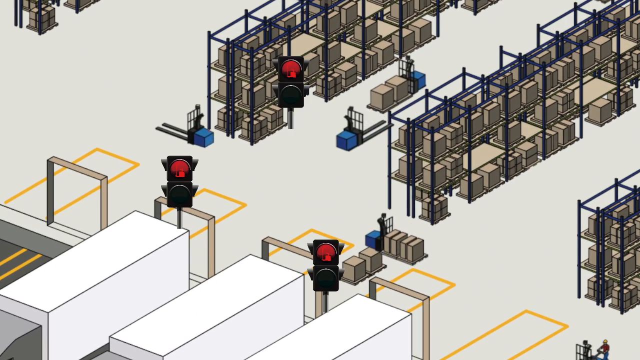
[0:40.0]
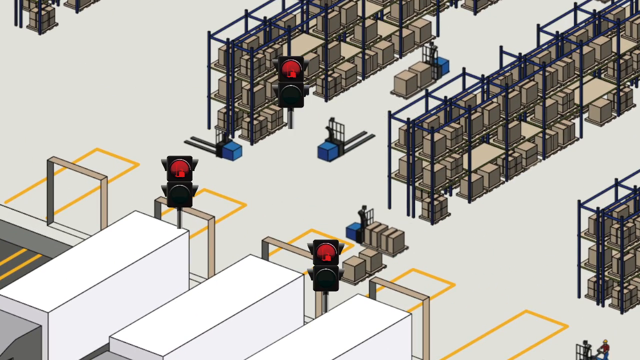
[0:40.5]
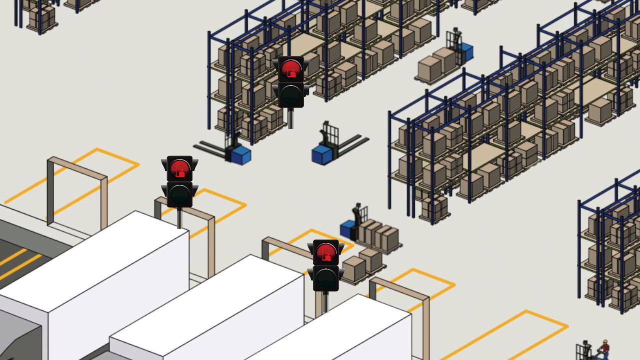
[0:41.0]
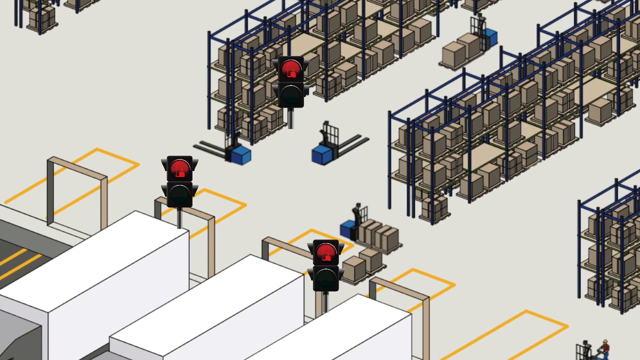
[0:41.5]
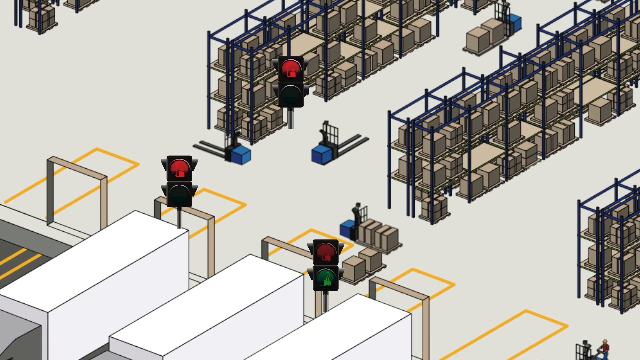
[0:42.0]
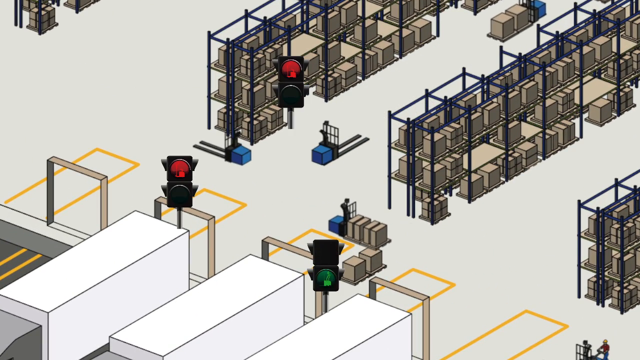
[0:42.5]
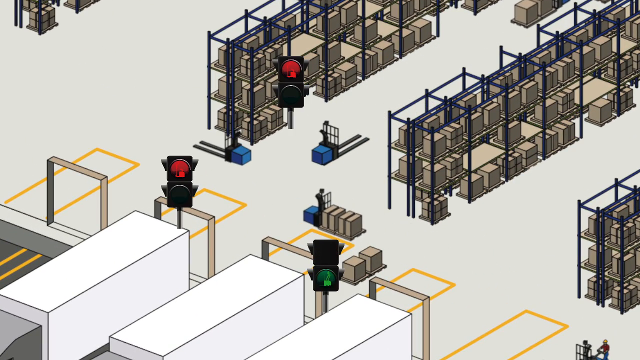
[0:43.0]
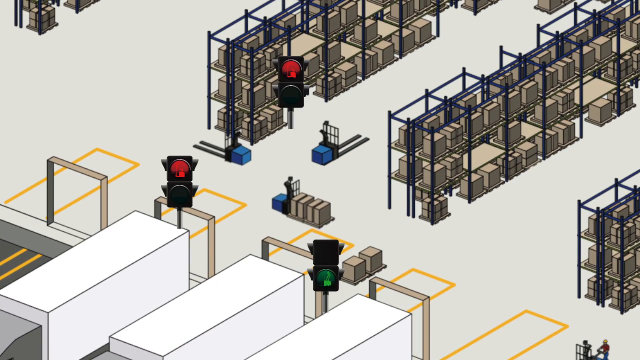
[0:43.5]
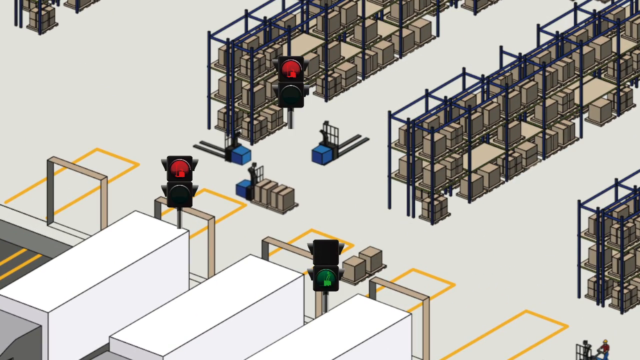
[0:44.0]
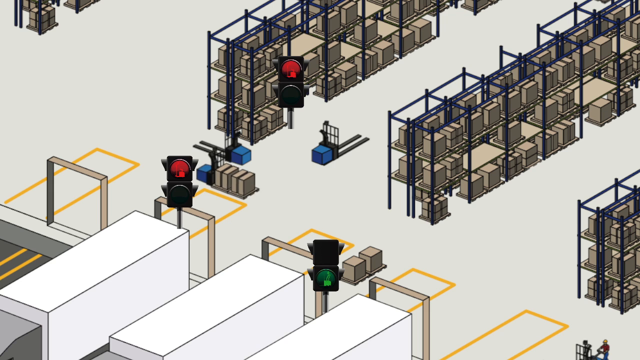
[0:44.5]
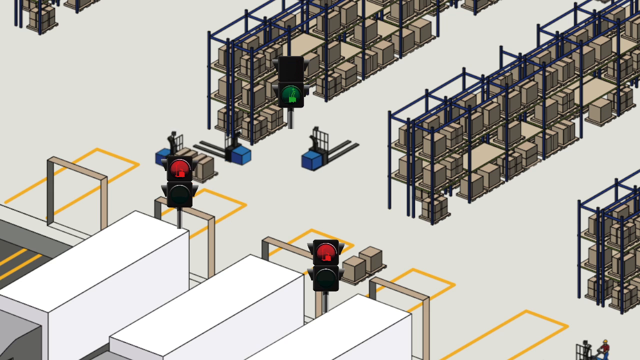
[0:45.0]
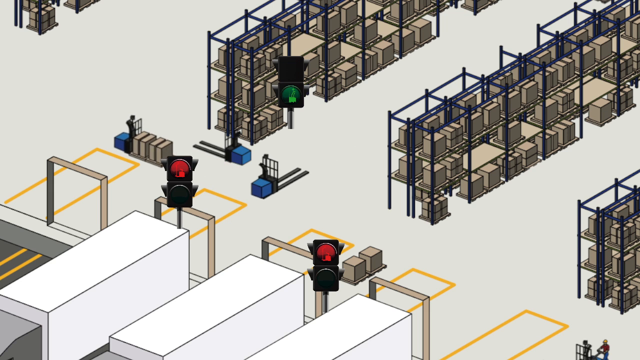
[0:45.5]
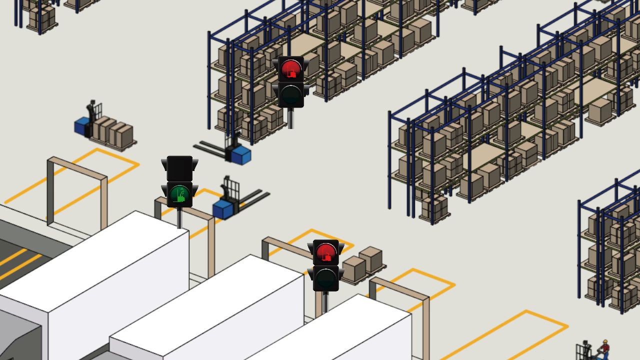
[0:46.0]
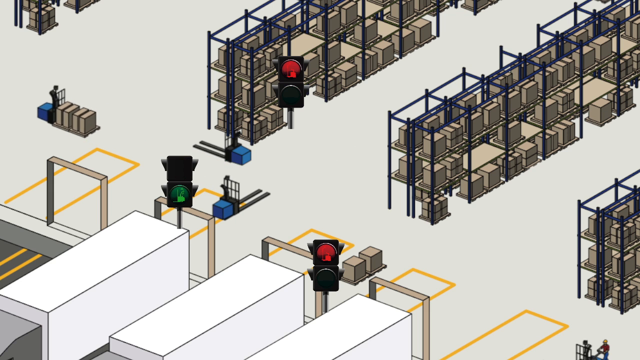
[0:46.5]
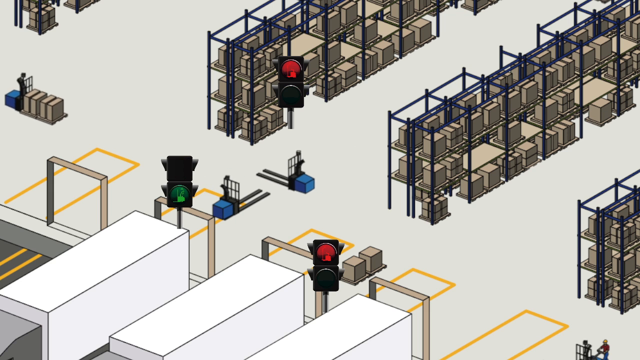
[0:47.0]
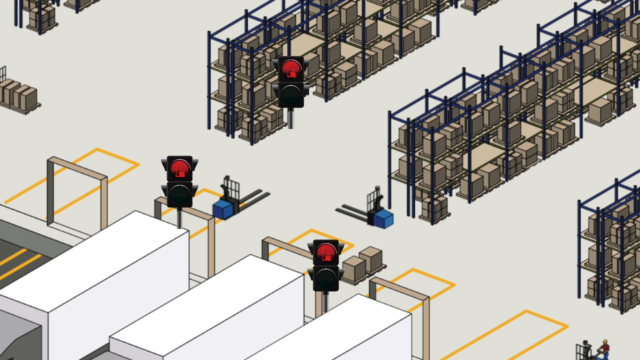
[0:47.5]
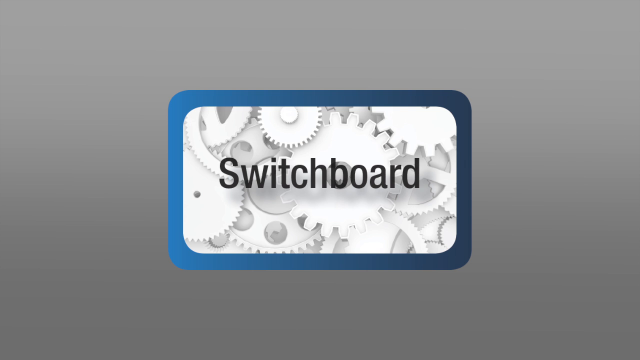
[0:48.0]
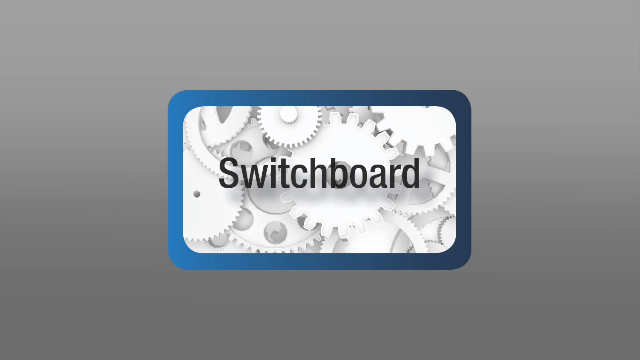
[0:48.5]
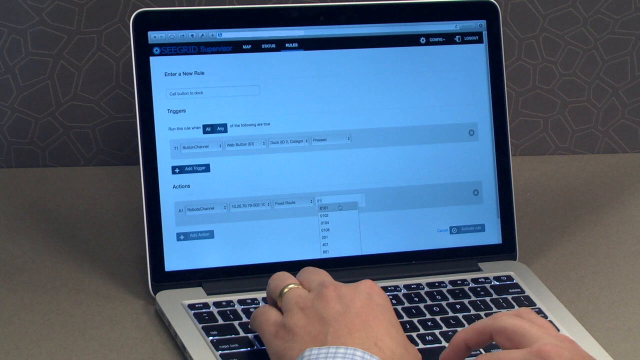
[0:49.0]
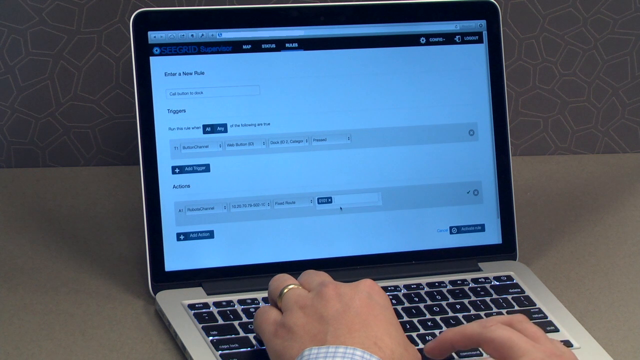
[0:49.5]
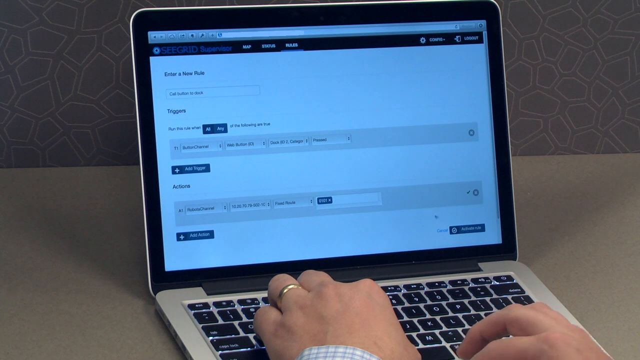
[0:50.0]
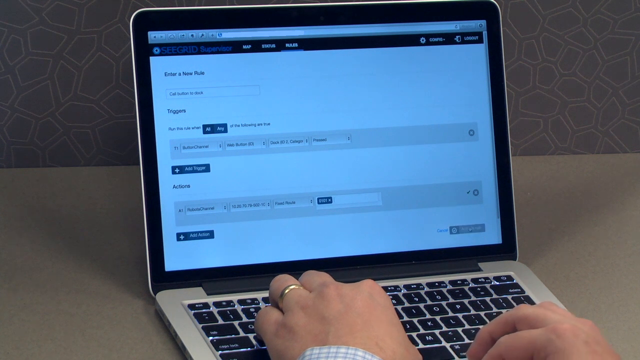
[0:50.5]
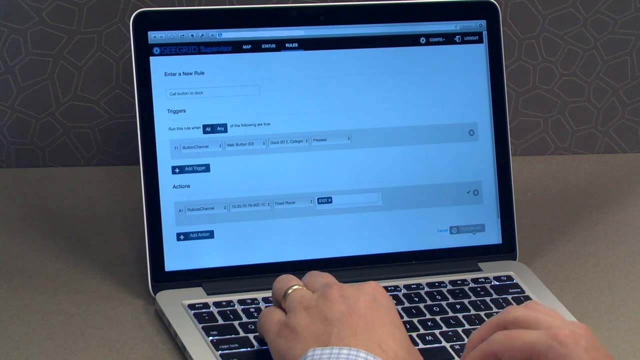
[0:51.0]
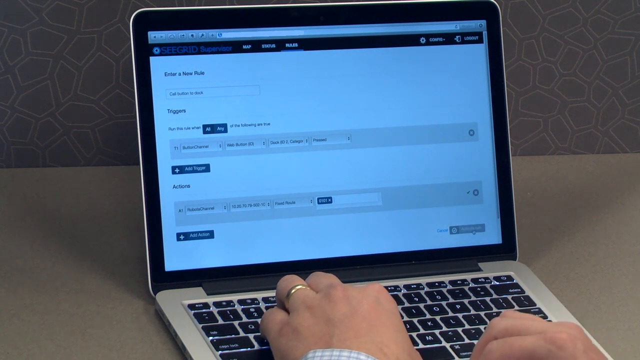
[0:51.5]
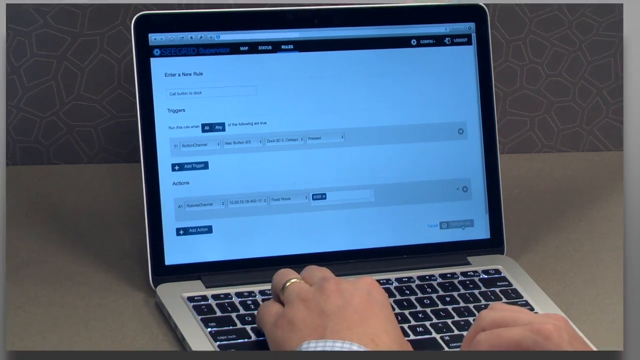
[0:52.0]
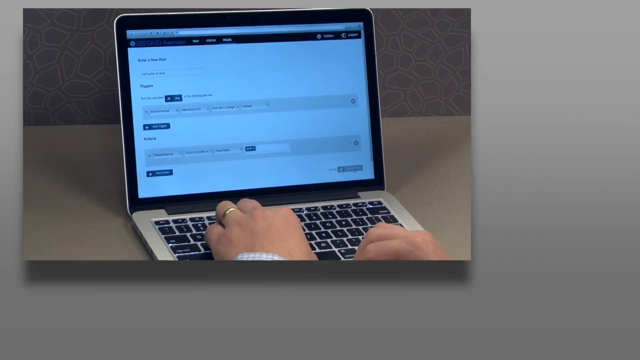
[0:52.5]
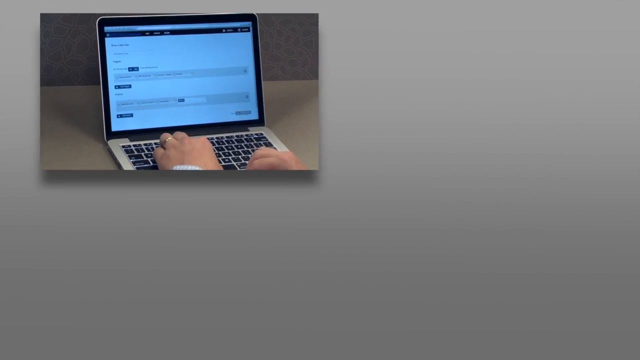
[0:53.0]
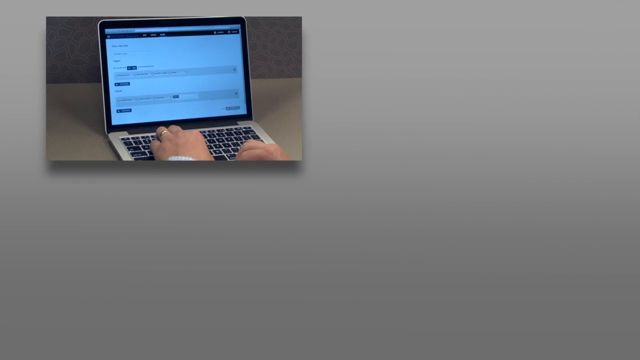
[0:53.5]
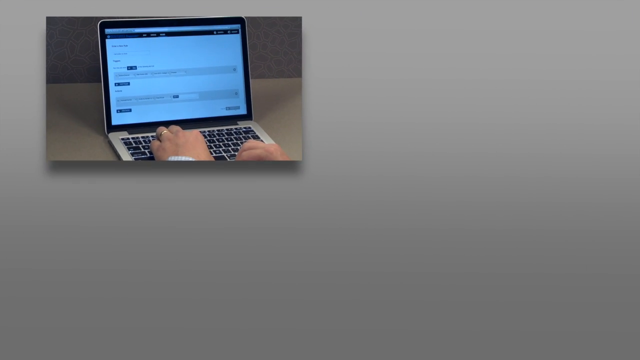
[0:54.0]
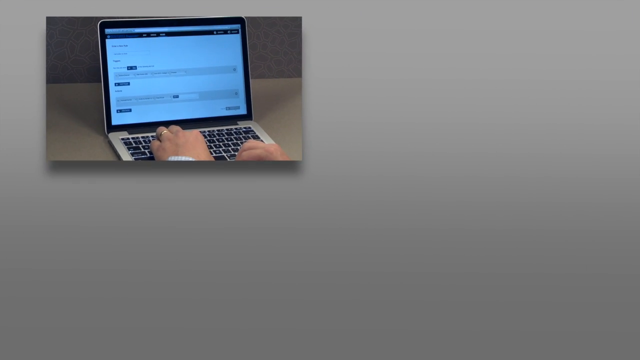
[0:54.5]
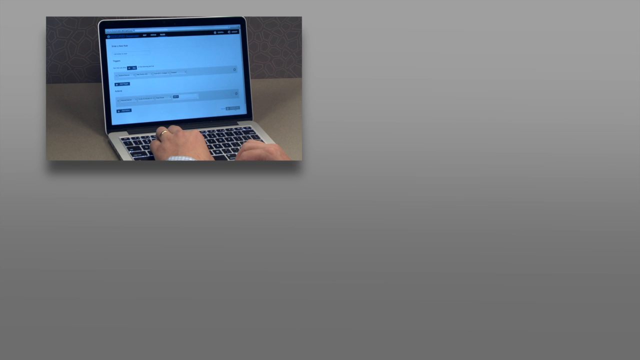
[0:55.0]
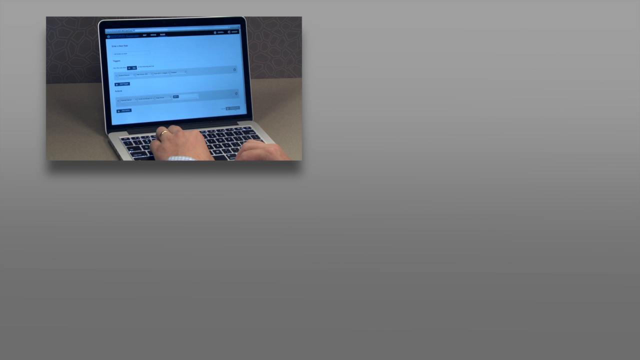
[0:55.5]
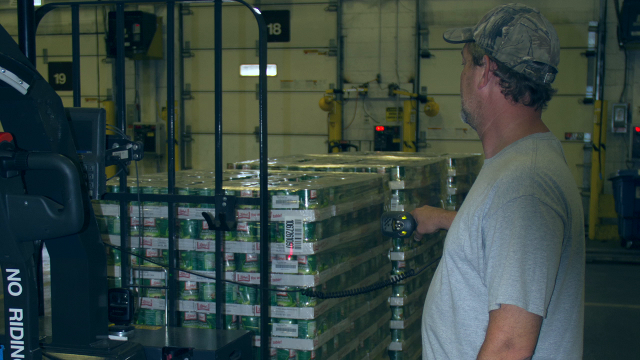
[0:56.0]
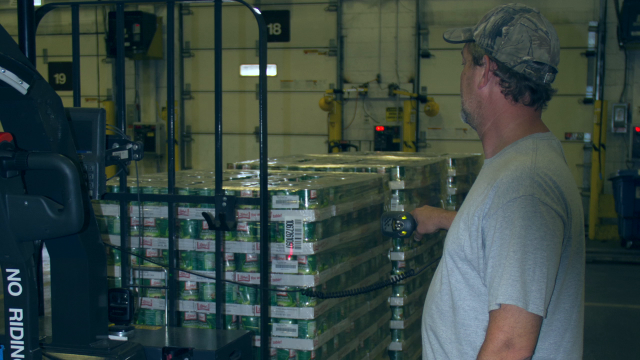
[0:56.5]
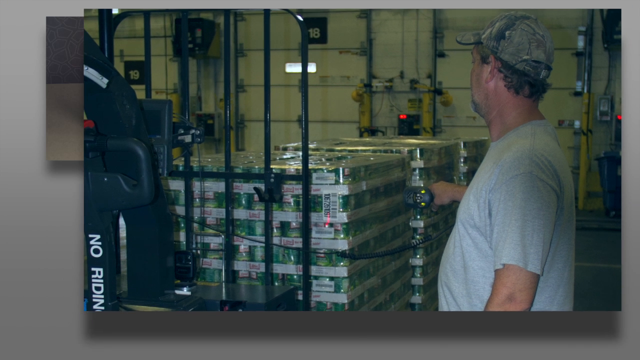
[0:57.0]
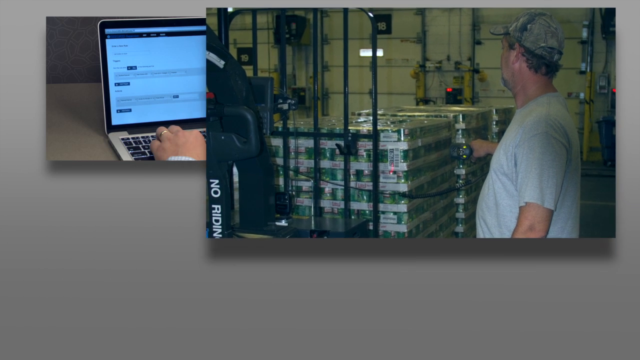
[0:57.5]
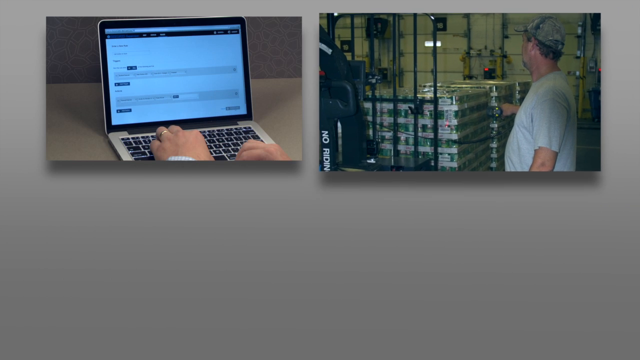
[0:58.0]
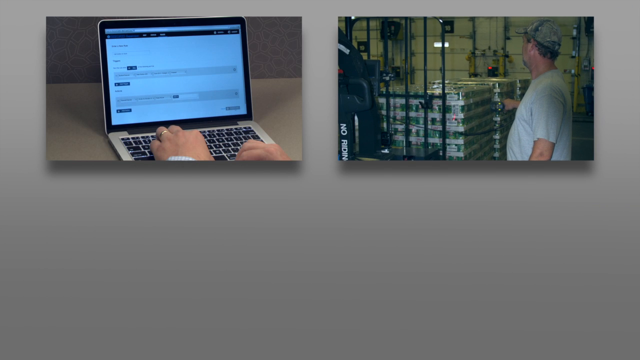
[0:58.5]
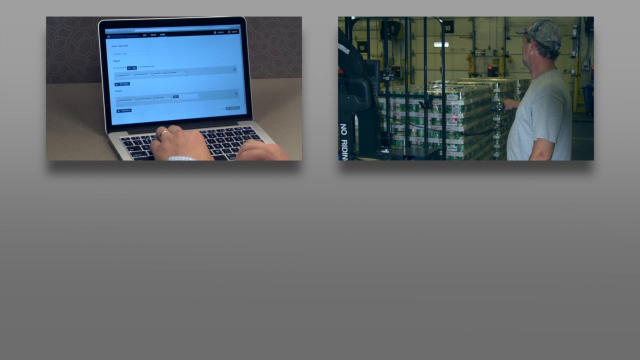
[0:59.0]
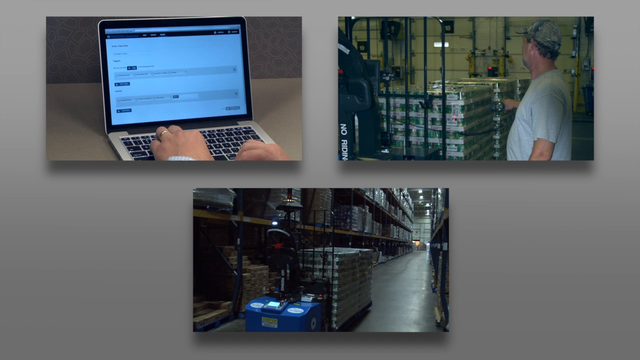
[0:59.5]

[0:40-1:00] An aerial view, like that of a wholesale store, shows forklifts running up and down, picking up things on the shelves, with robots inside directing the forklifts. A dashboard is shown, along with someone working on a laptop and a man in an industrial setup, seemingly a place where something is manufactured. In the wholesale store animation, the products are represented by grey square boxes, the aisles are a light grey color, and the shelves are shown by blue poles erected and crossing each other. The forklifts' movement is controlled by the robots.